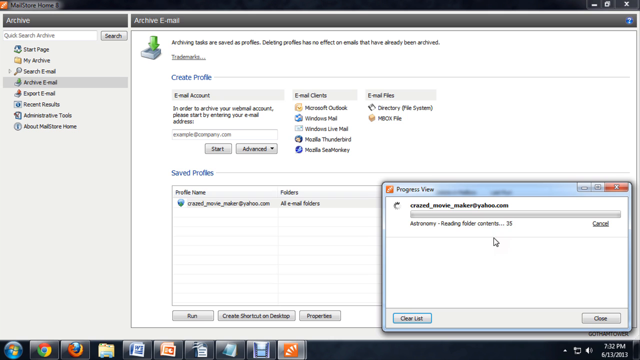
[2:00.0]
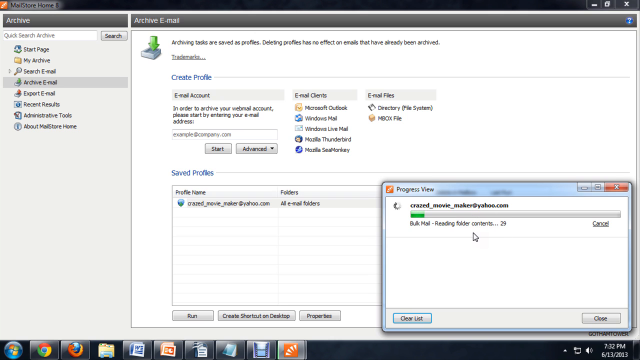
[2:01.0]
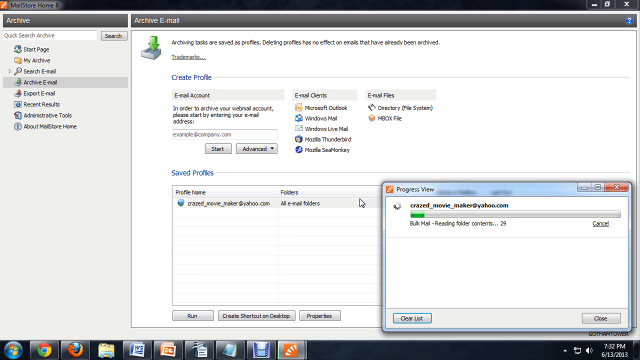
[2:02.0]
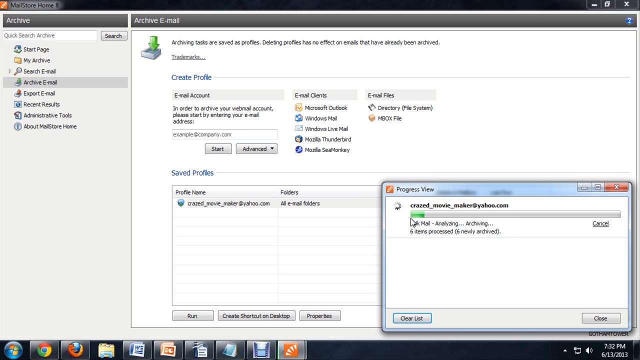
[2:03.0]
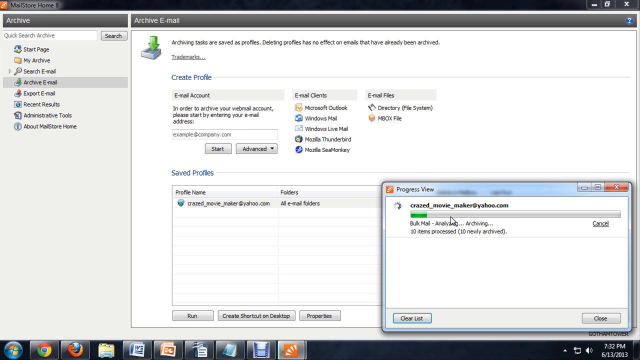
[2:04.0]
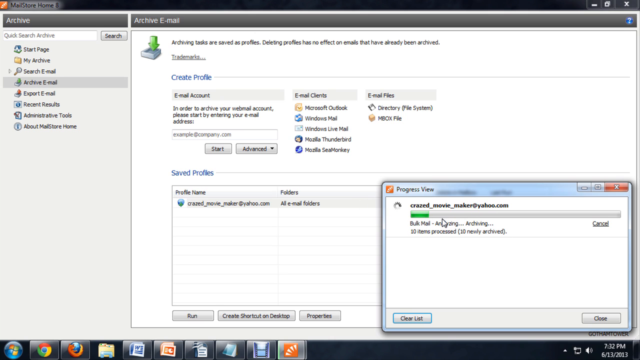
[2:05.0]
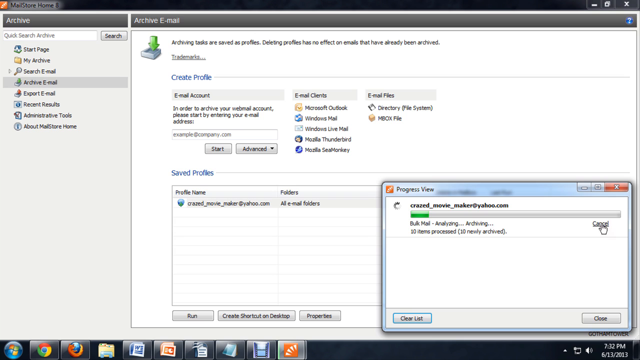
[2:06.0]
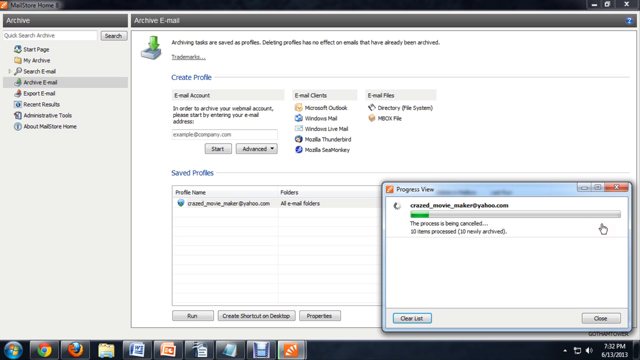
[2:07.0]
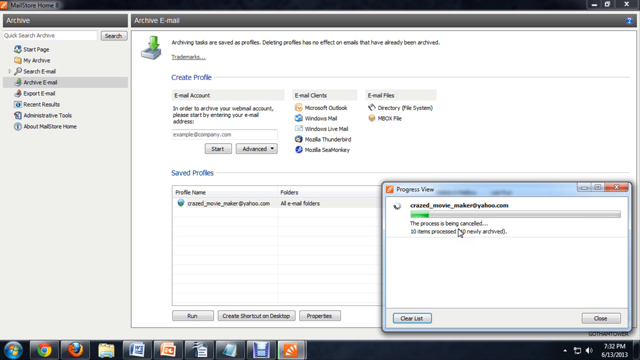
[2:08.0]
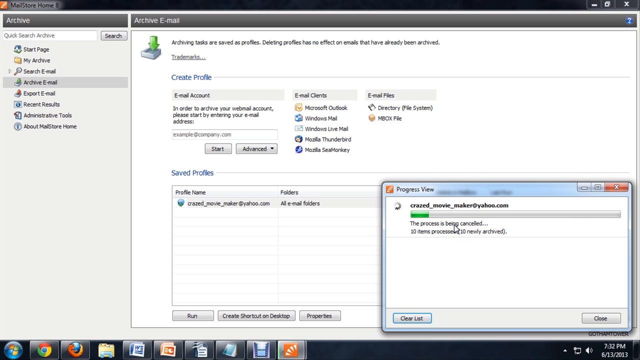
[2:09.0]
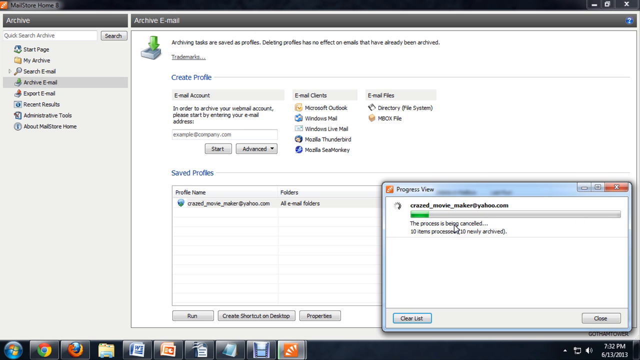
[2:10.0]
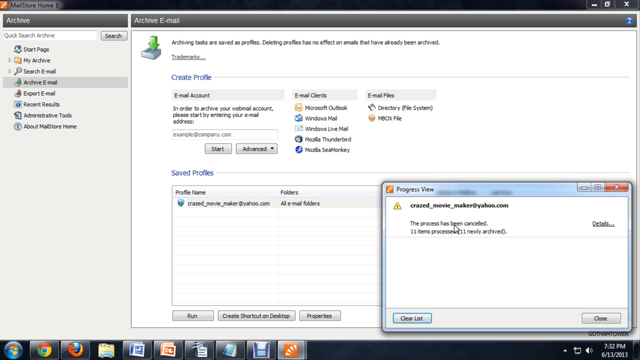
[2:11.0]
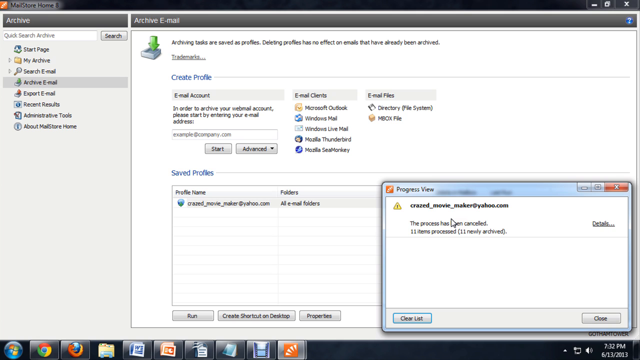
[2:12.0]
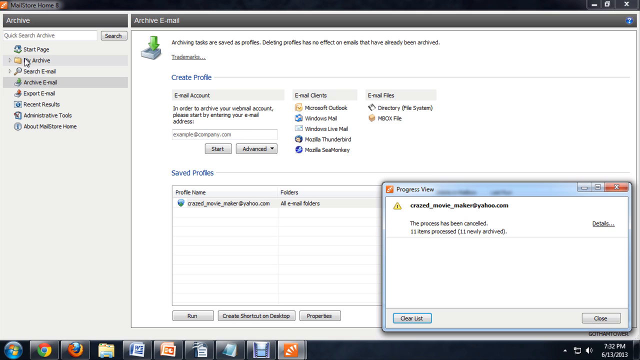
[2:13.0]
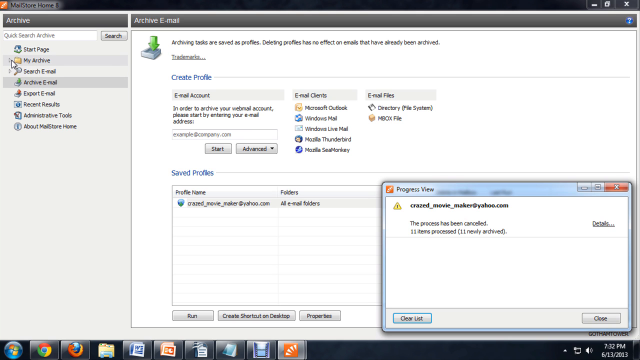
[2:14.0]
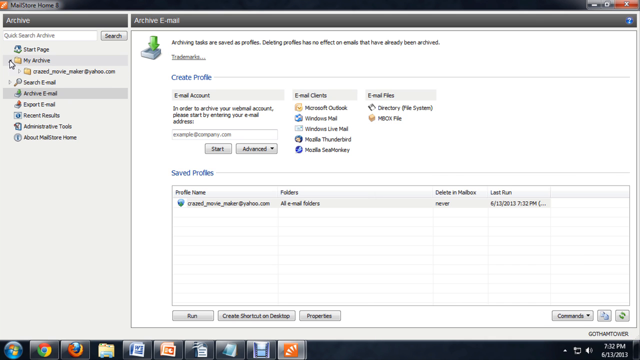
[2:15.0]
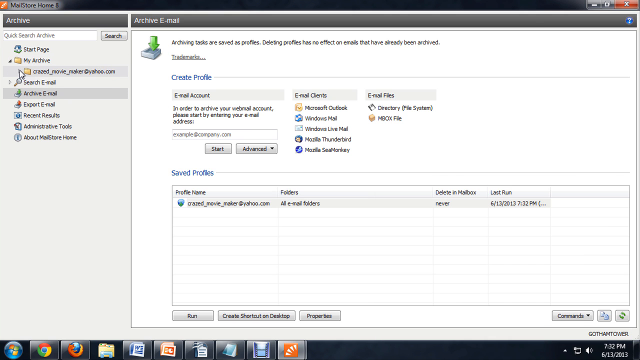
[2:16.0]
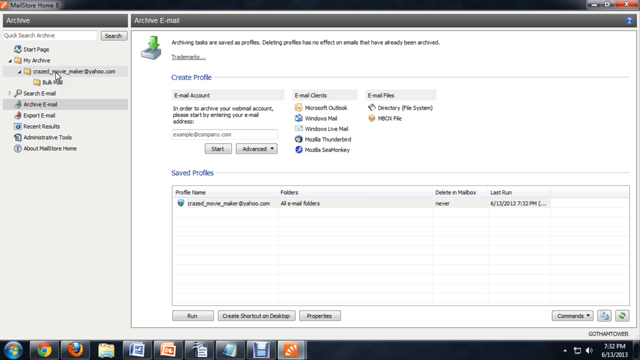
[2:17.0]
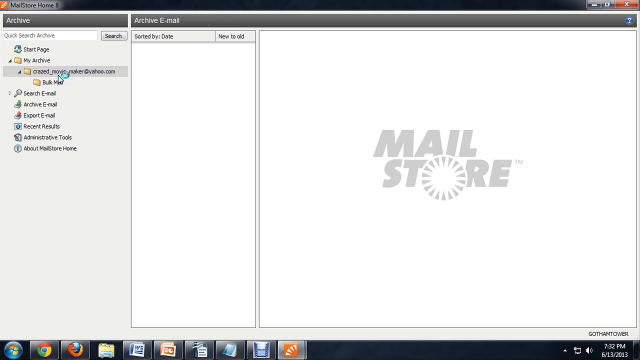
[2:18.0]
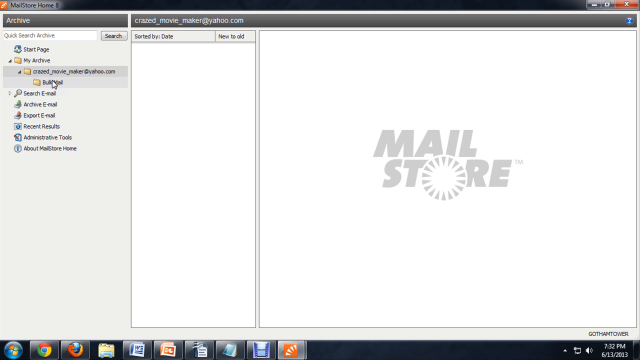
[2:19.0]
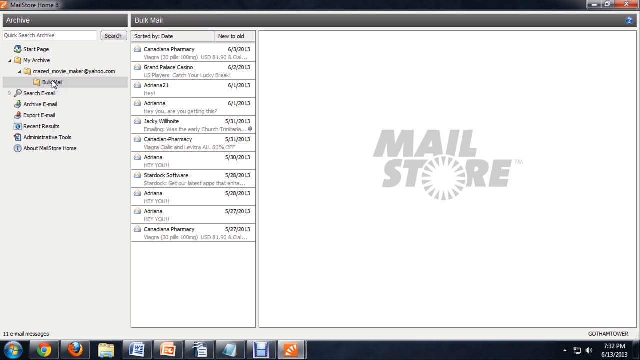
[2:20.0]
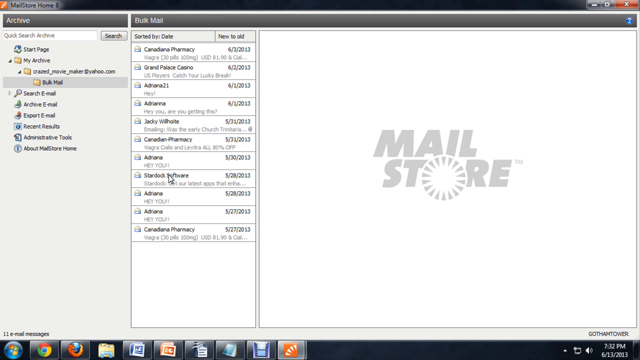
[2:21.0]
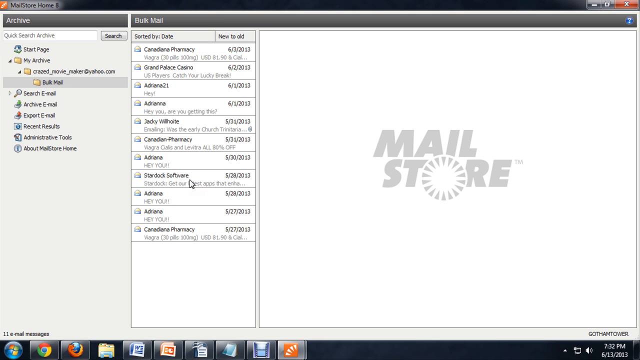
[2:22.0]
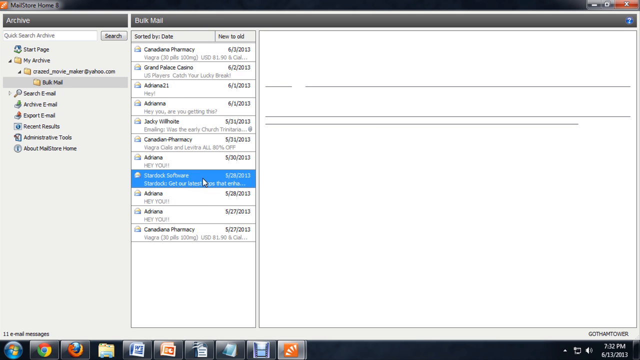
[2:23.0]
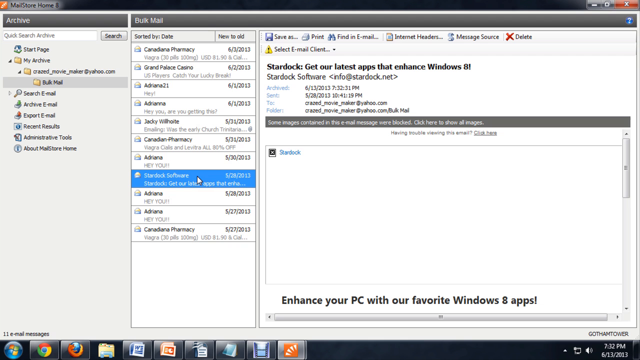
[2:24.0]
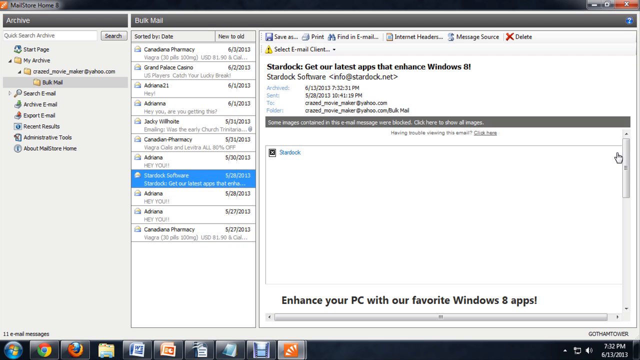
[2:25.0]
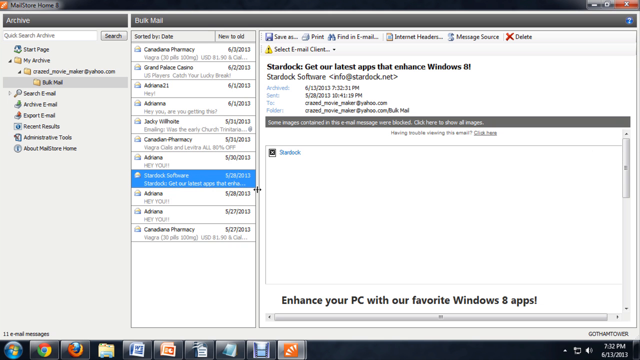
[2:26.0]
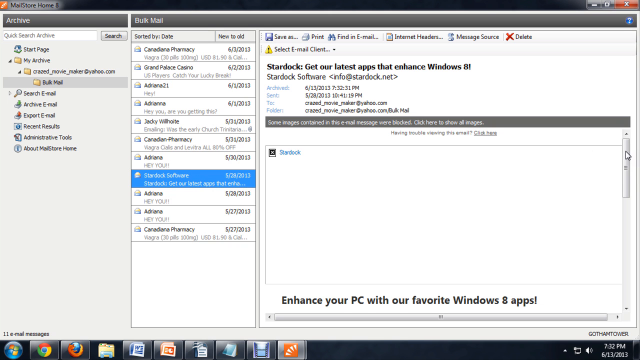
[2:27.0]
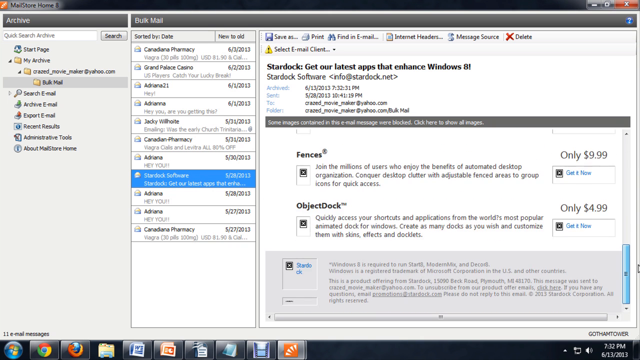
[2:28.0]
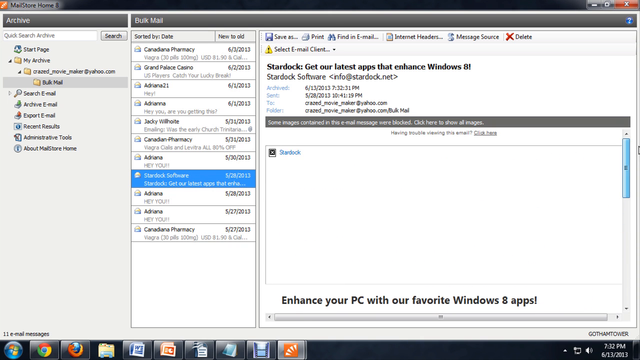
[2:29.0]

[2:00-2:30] In the Mail Store app, the presenter appears to have clicked run on the new profile, and a progress bar shows it running. He then clicks cancel, and the screen shows it has been canceled, with an option to see the details of why. The view moves to a tab on the left labelled My Archives. He clicks a drop-down button on a folder, opening another folder that looks like the folder for his email account, and inside that another folder labelled bulk mail opens. He clicks an entry above bulk mail, and a screen lists all the bulk mail in the account. He opens one of the bulk mail messages, which shows the basic information of an opened email, and scrolls down to show more of it.